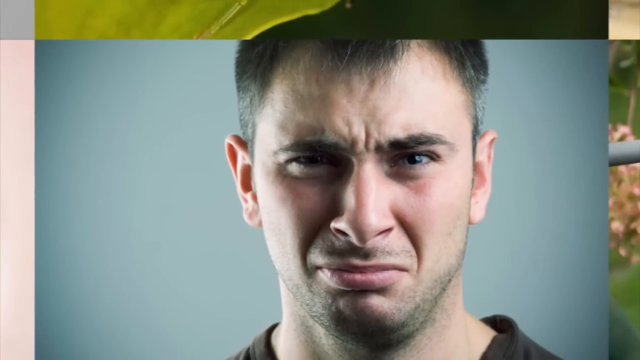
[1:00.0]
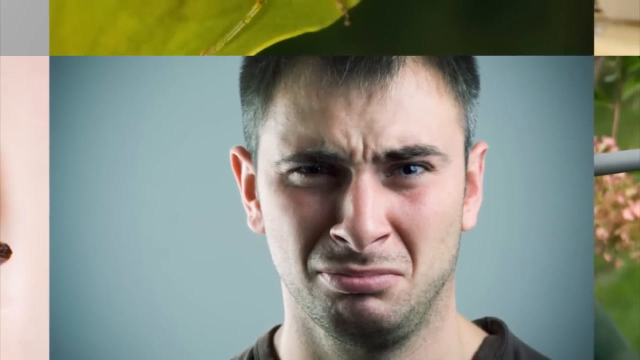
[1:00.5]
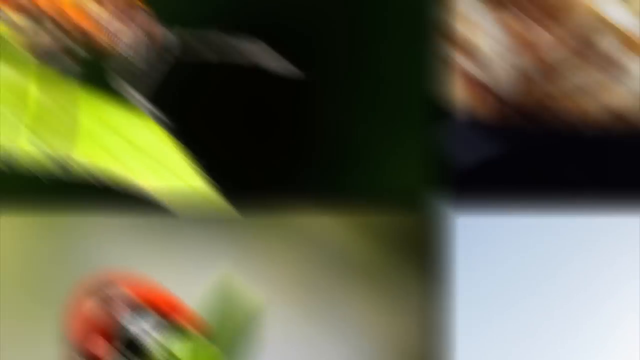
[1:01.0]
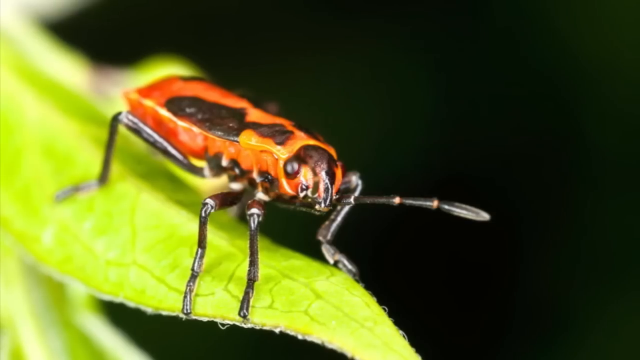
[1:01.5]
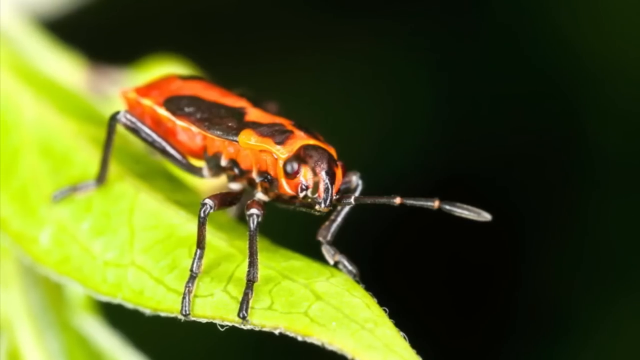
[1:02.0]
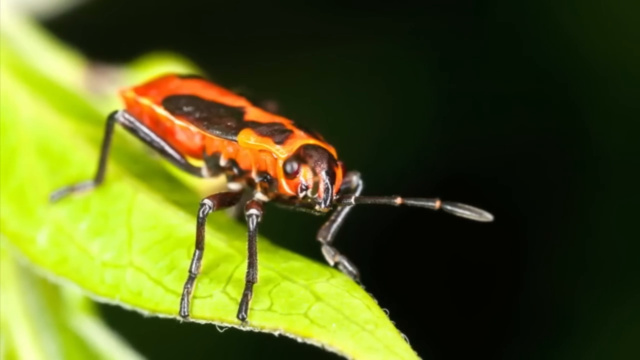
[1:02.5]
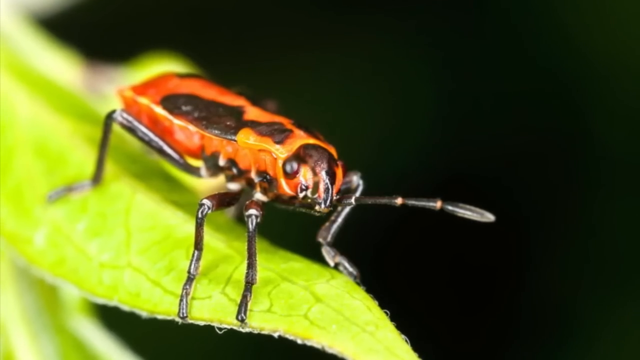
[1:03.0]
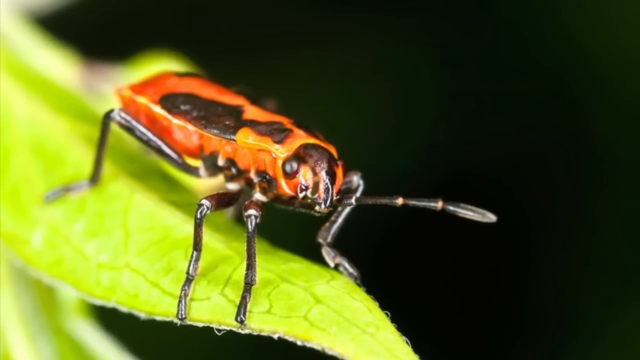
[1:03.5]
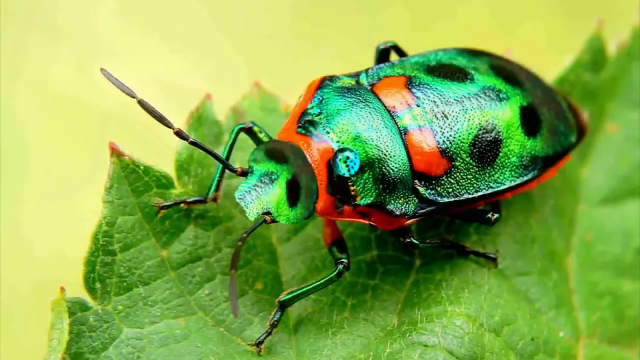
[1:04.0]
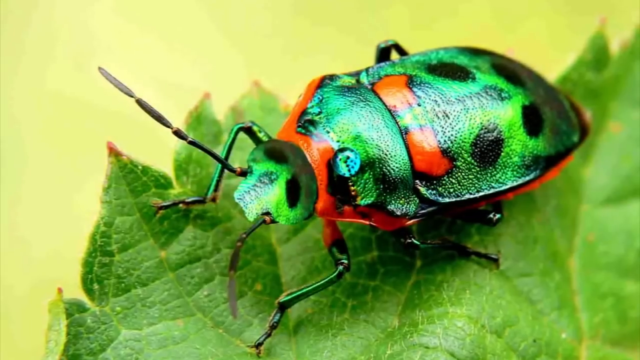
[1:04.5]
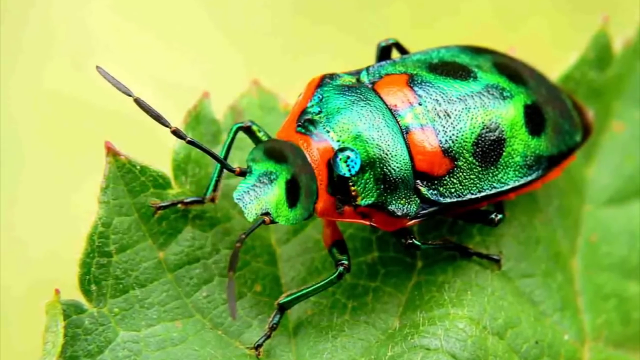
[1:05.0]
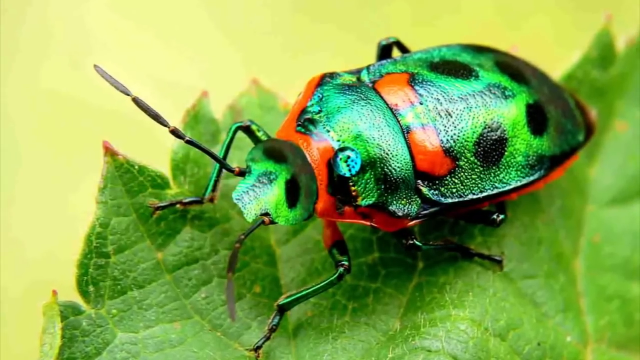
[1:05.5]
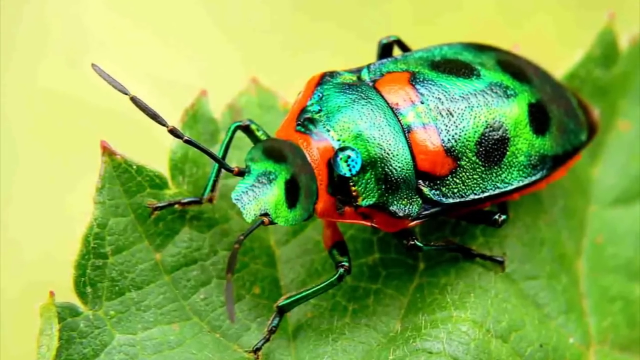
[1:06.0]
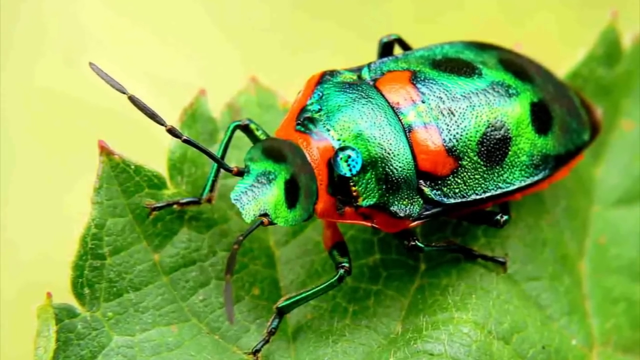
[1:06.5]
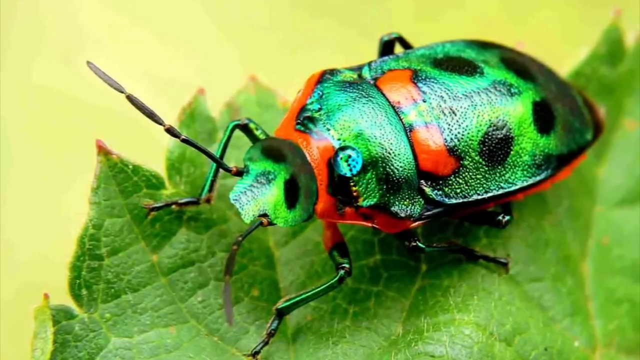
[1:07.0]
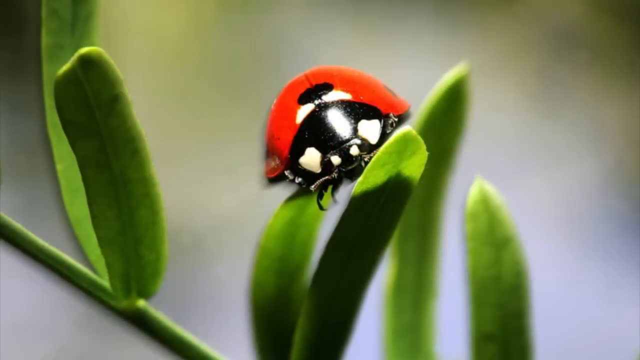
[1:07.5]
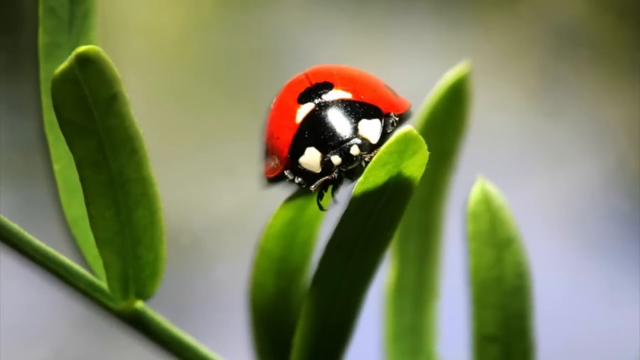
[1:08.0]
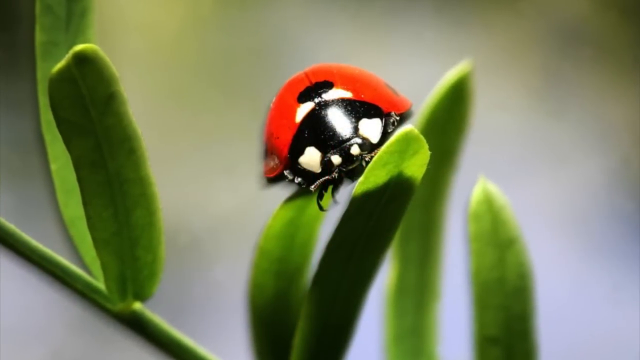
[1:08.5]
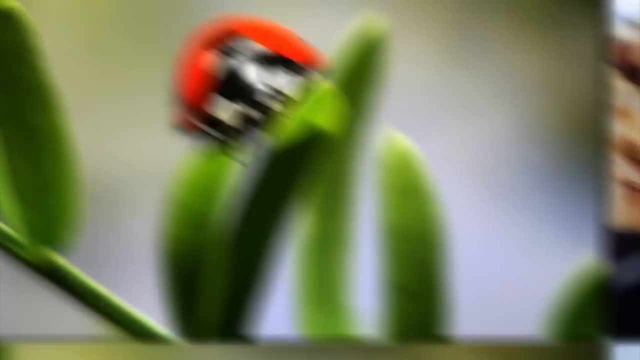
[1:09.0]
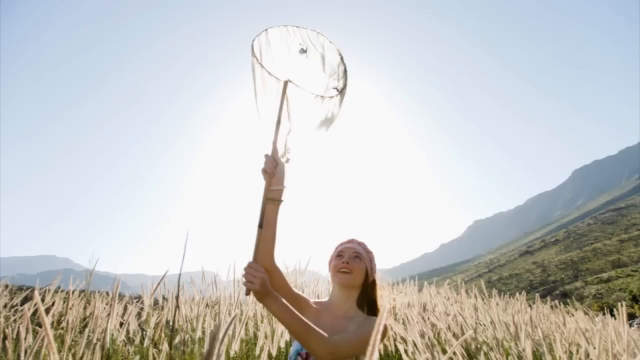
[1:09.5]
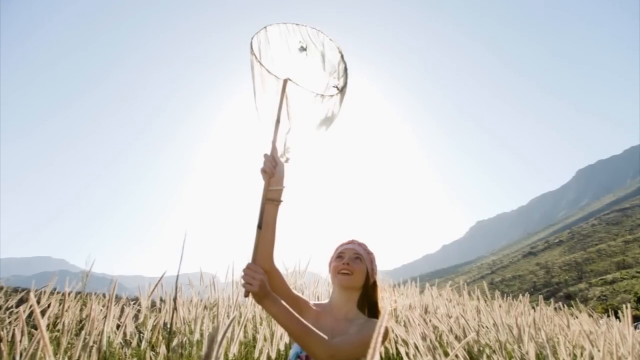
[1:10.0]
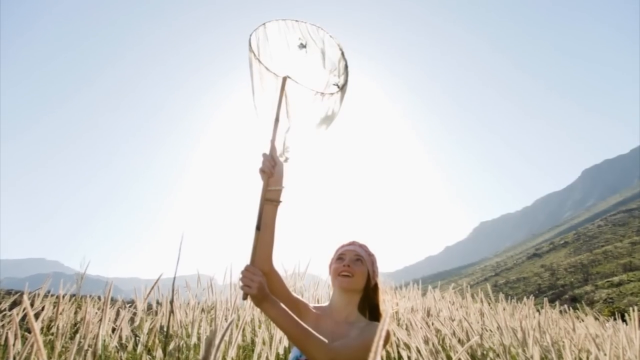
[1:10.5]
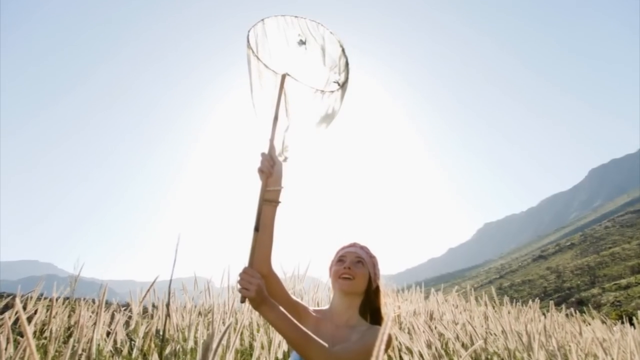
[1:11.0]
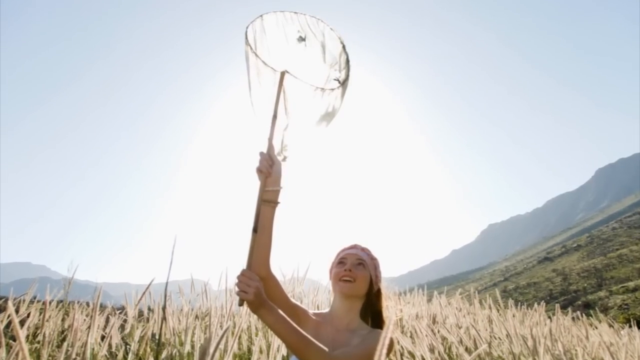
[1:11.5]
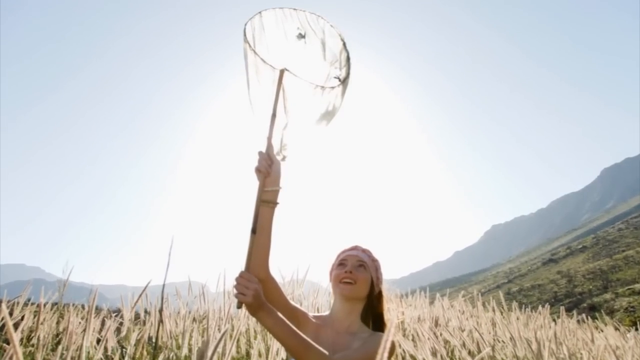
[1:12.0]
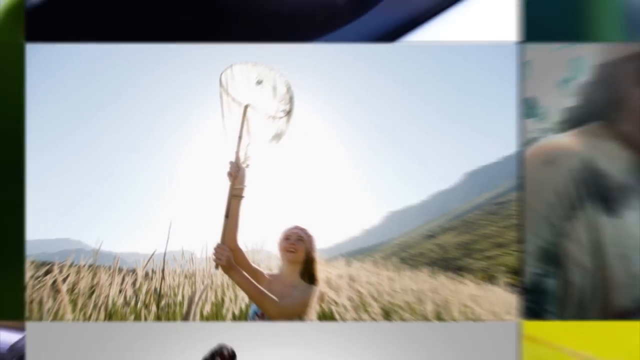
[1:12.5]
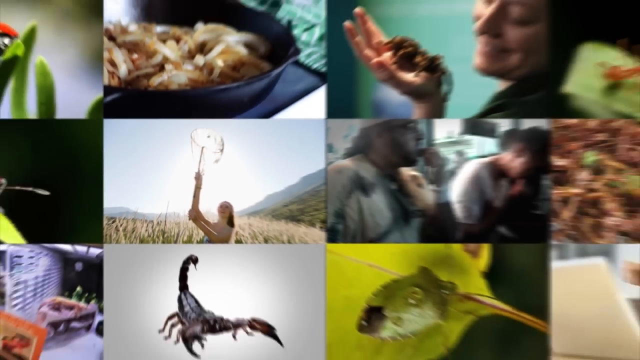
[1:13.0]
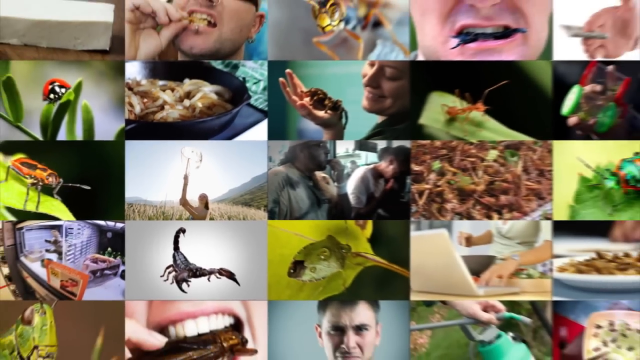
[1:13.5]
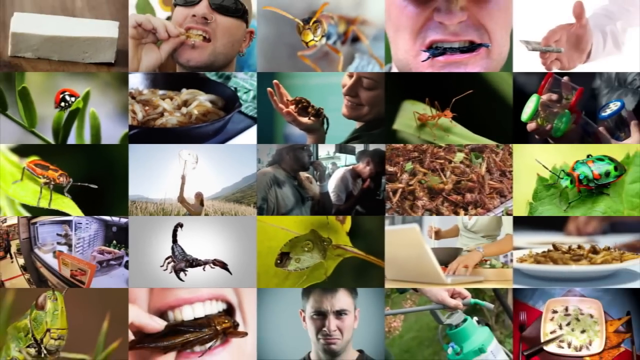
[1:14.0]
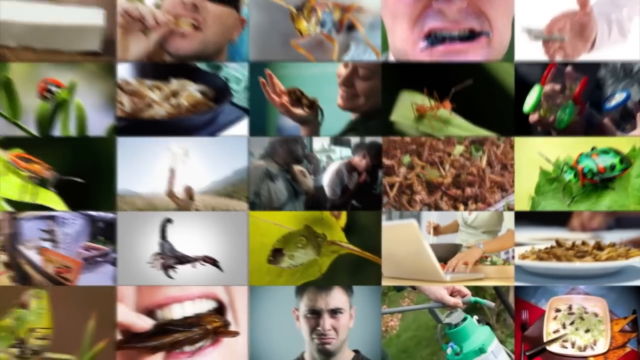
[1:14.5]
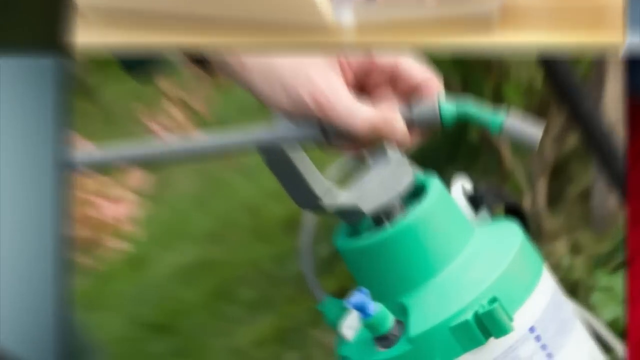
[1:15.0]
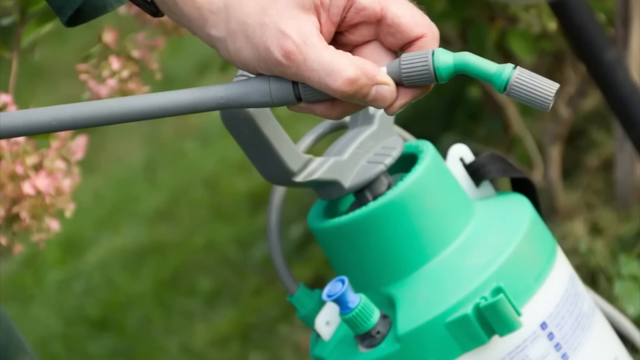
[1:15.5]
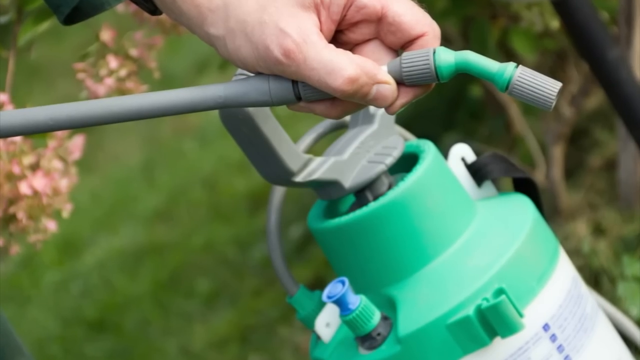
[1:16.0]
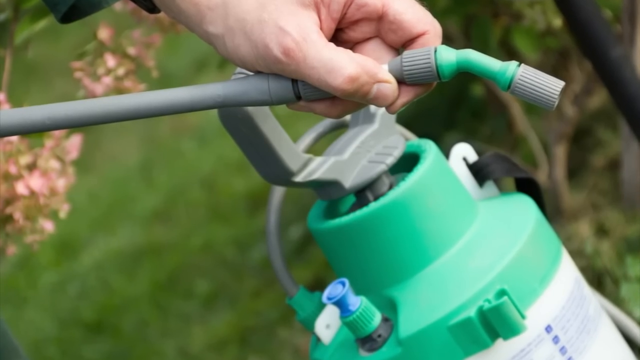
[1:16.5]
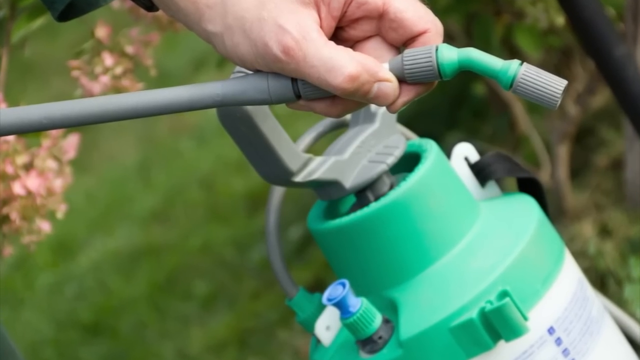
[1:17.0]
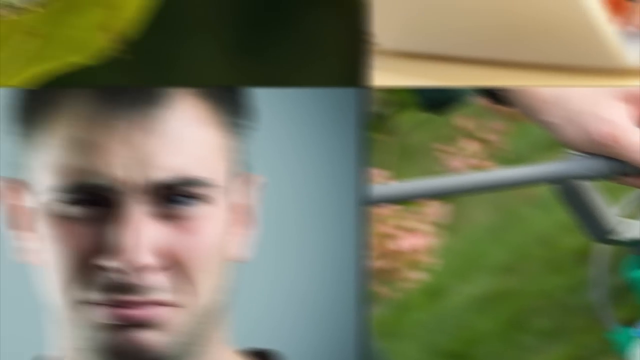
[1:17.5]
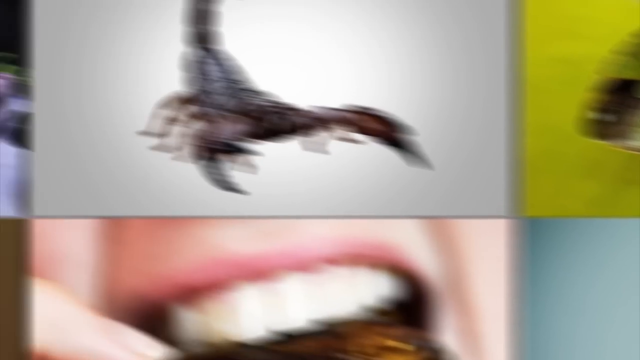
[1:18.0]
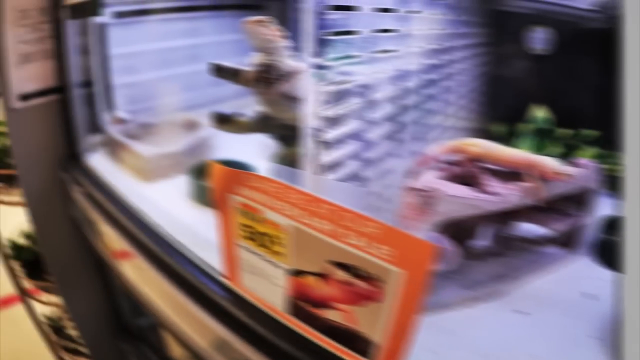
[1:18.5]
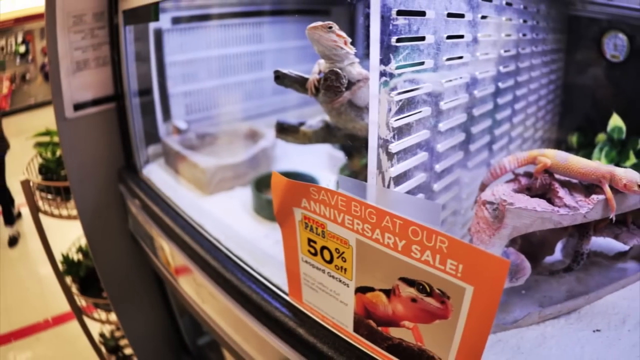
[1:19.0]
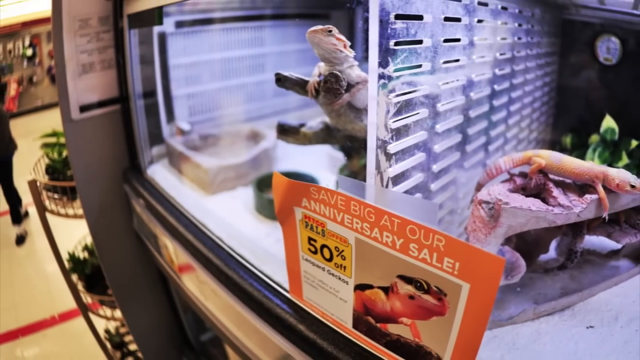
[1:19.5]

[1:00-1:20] The man with the very displeased face is still shown, then the image changes to what looks like a beetle with an orange body with spots, perched on a green leaf or stem. Another beetle follows, fluorescent, luminous and neon, with spots and orange-like accents, also on a leaf. A red ladybug is on some grass or a tree. A woman with a net is trying to catch something, maybe a butterfly. A zoomed-out image of all the pictures appears, followed by something that seems to be a watering can or pesticide sprayer. Then a pet shop is shown selling little geckos and lizards.